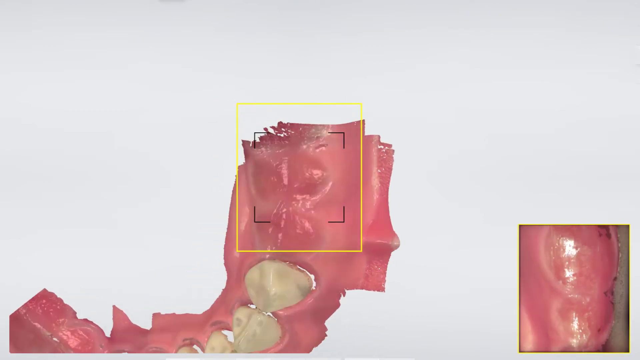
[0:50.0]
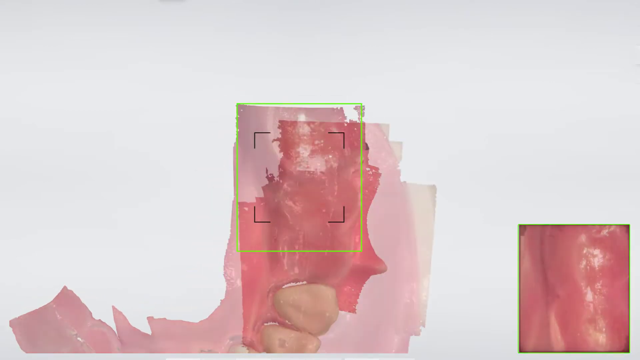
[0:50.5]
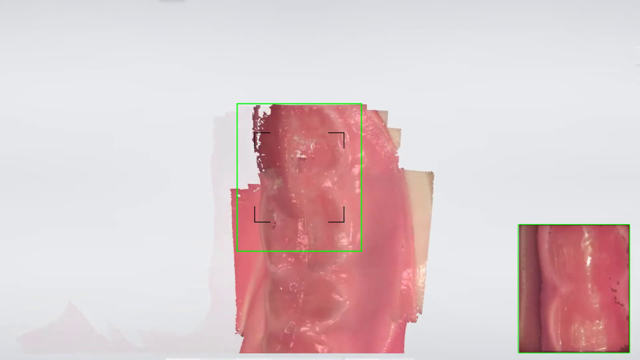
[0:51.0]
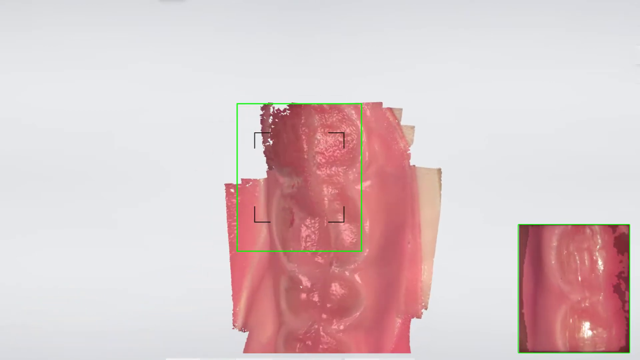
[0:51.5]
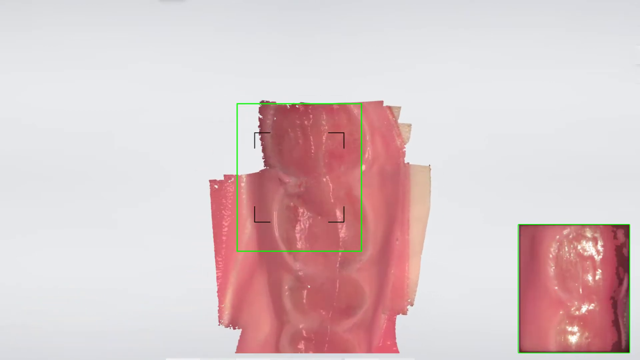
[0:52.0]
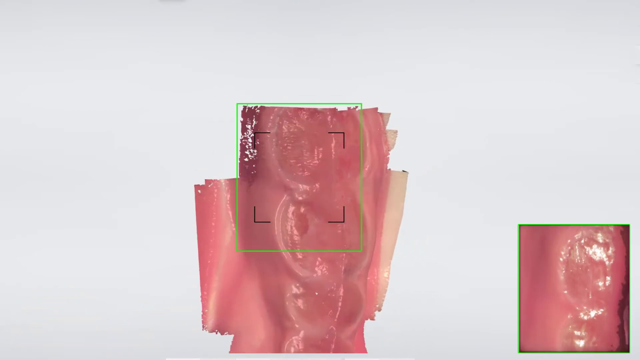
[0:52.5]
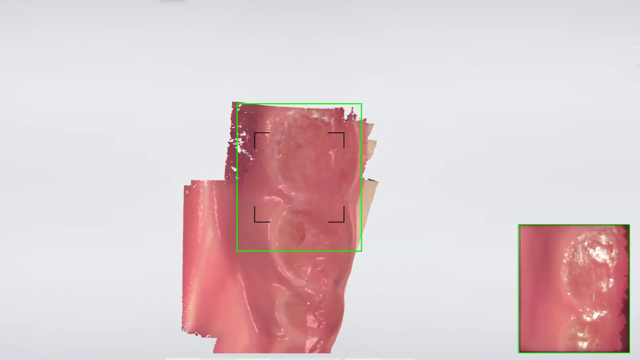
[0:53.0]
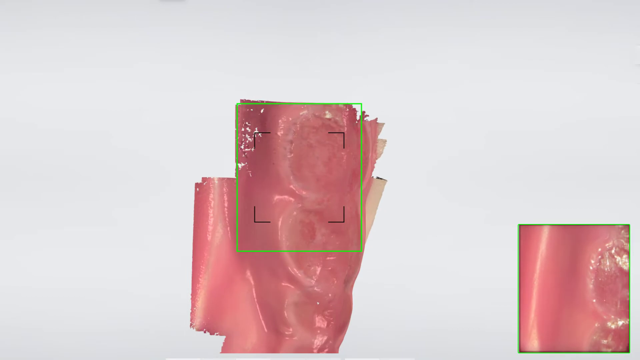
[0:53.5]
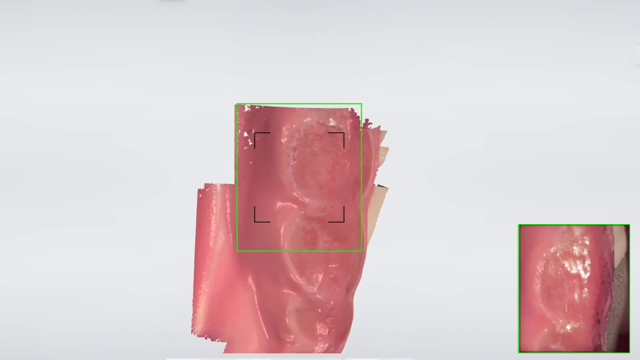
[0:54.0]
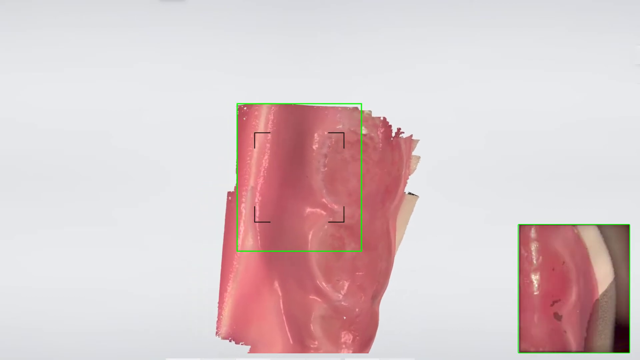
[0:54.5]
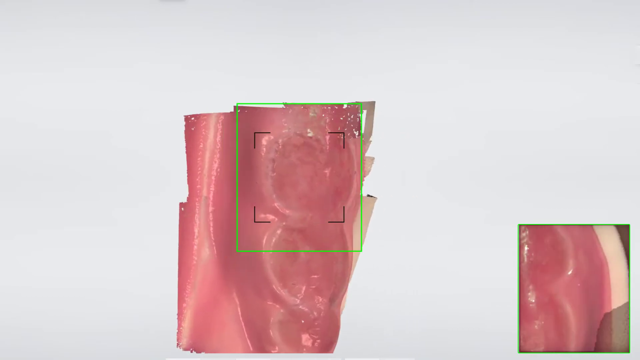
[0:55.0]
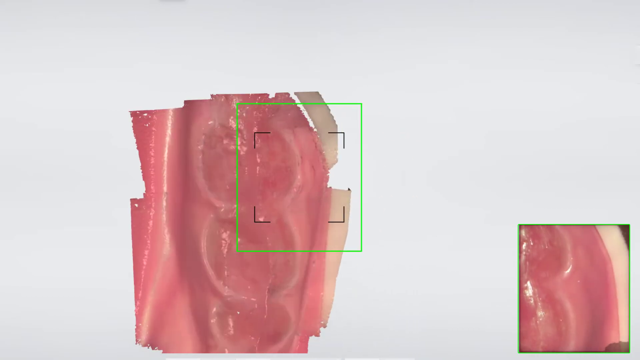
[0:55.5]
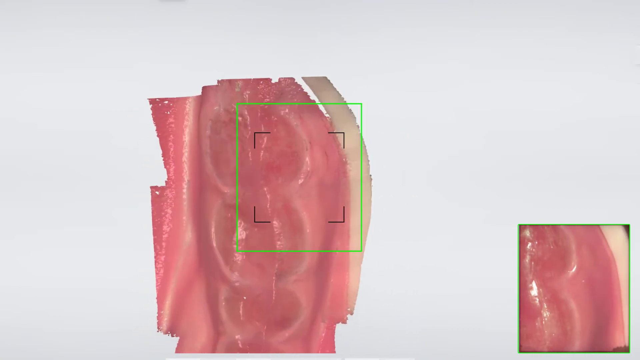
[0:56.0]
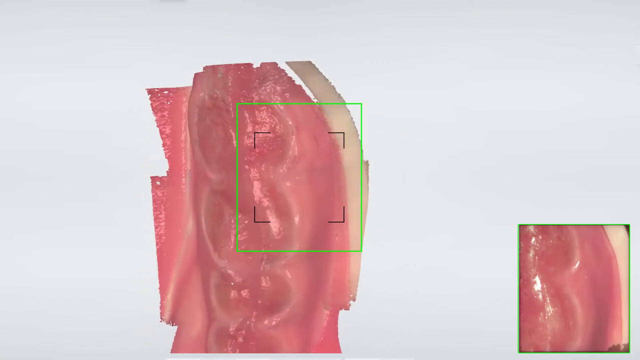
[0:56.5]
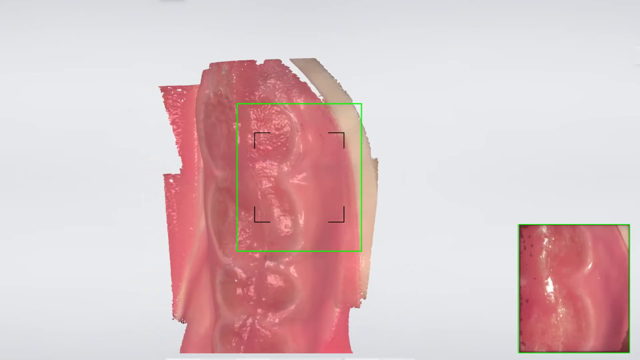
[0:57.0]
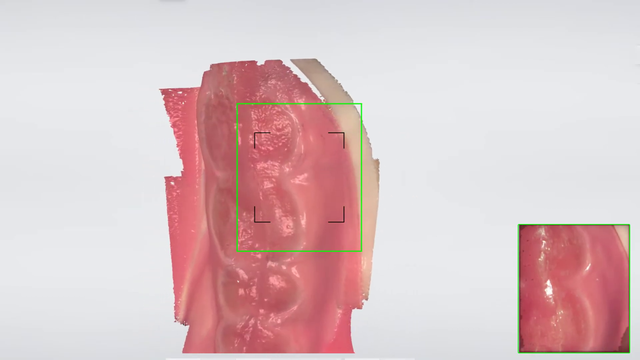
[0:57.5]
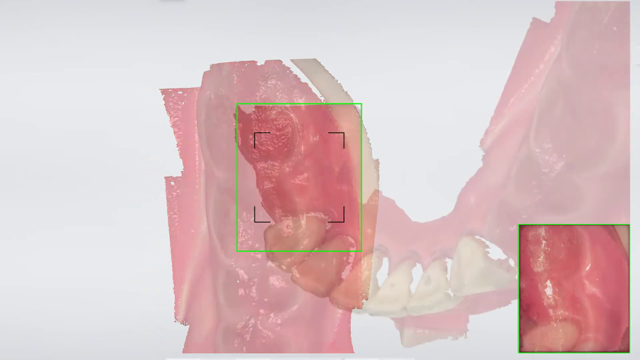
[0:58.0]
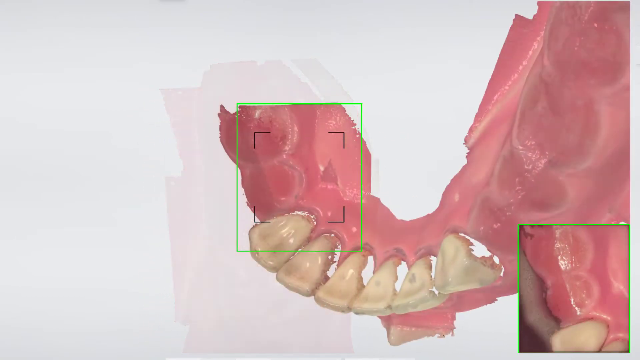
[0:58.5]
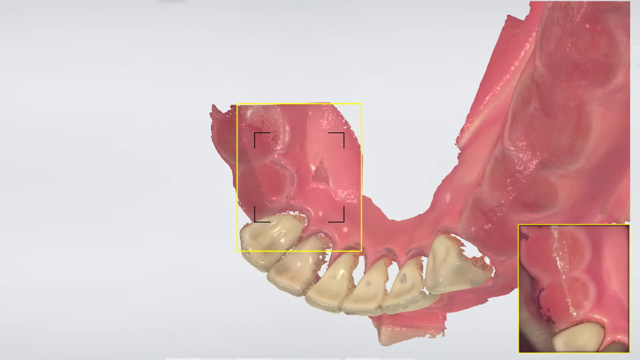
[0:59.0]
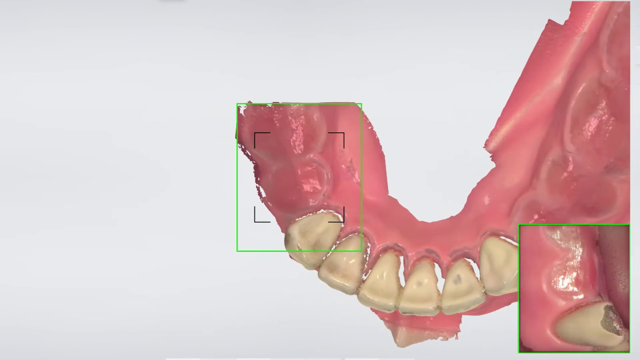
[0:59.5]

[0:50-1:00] The view is at the back of the right side of the teeth. The image goes further up into the jaw, showing the gaps where teeth were previously. It then changes to show the left side of the gum, focusing over the holes and collecting more details. Some gaps behind the teeth remain where the image has not been completed. The camera image is still on the right, and the centre shows the model of the teeth being built up. The gums and teeth all look quite healthy.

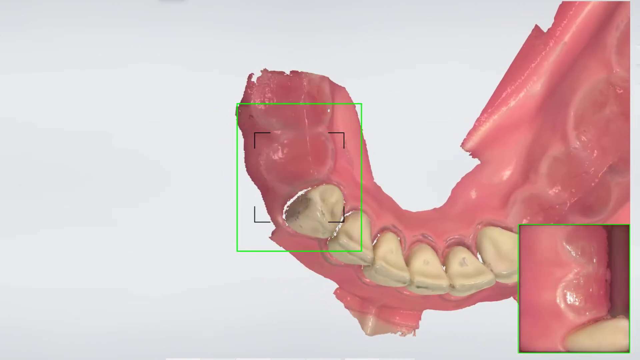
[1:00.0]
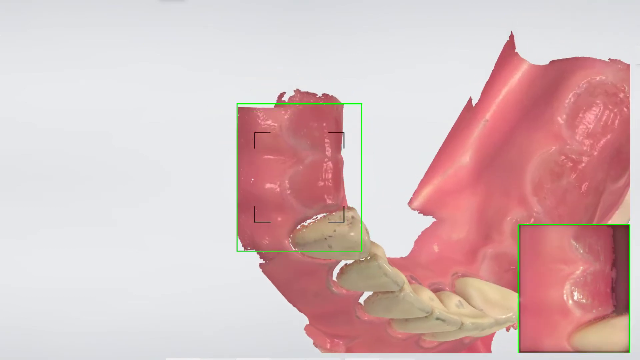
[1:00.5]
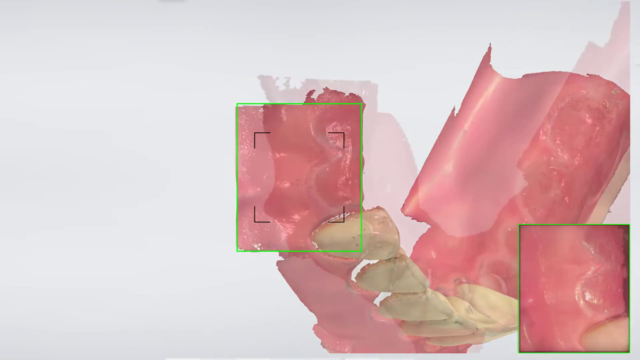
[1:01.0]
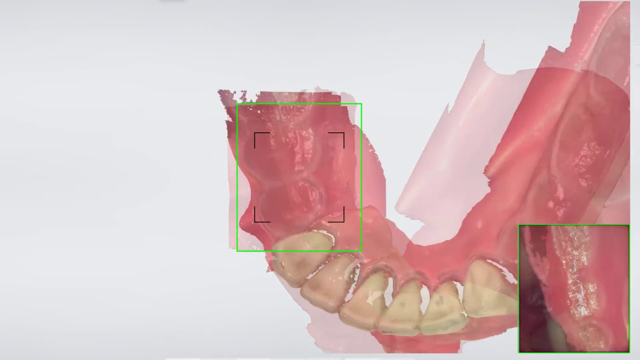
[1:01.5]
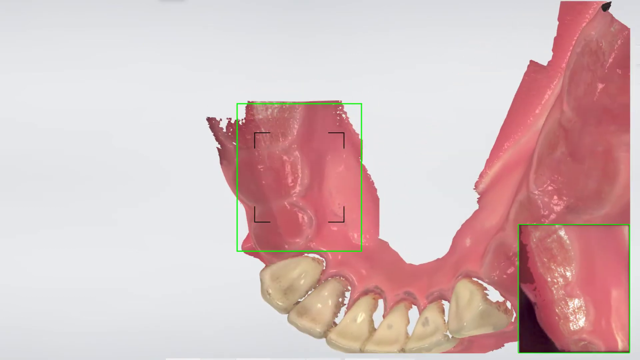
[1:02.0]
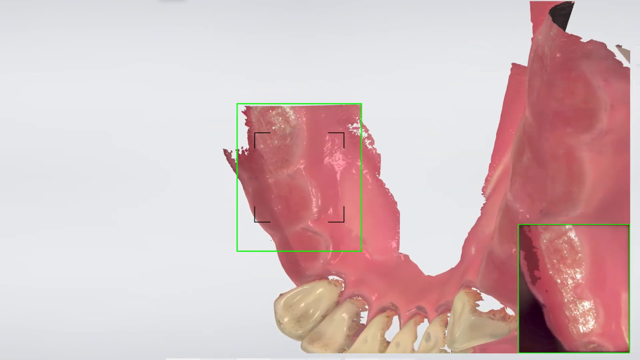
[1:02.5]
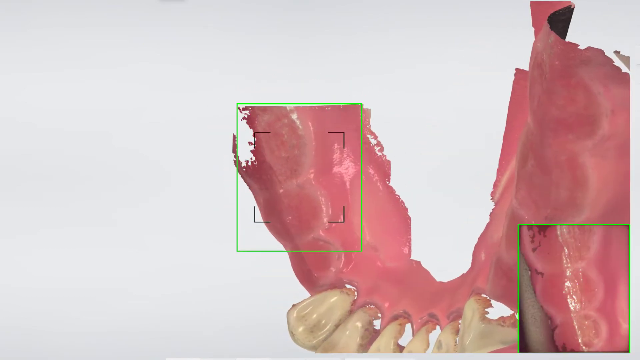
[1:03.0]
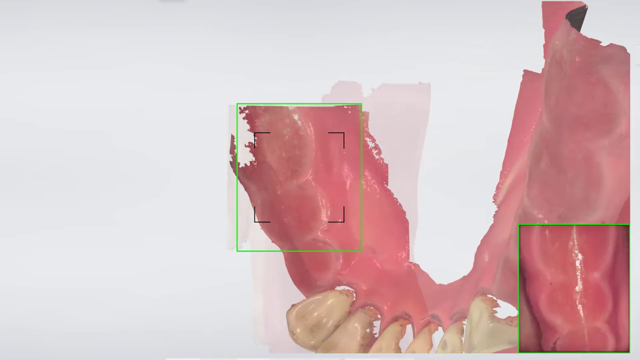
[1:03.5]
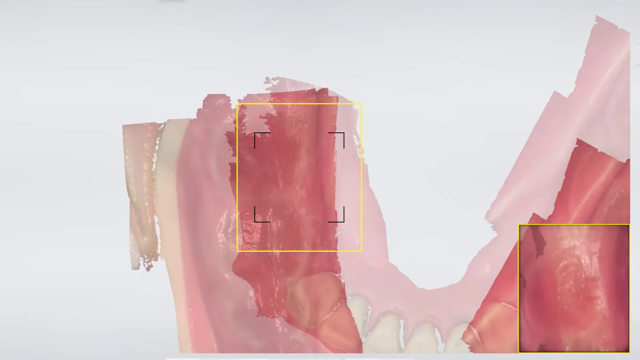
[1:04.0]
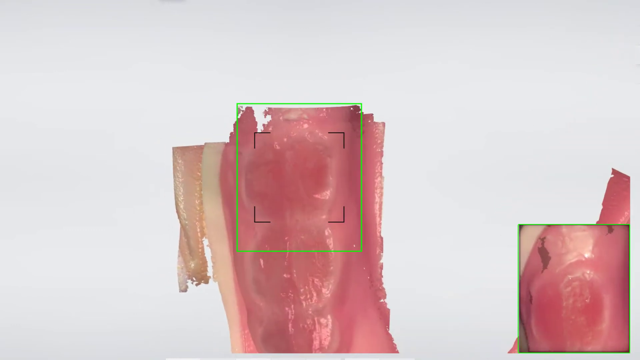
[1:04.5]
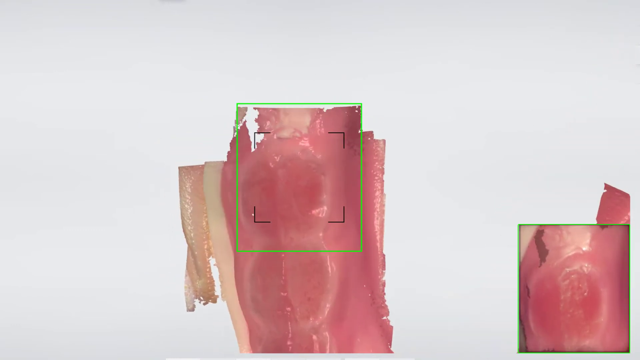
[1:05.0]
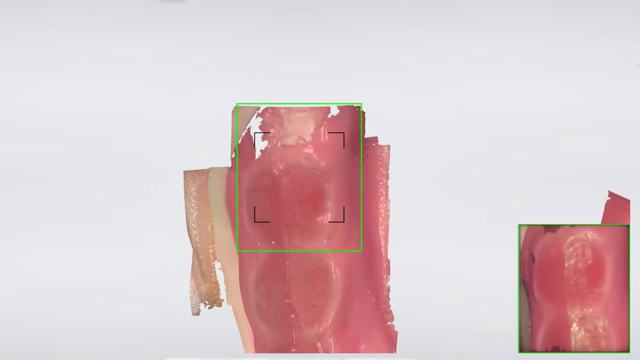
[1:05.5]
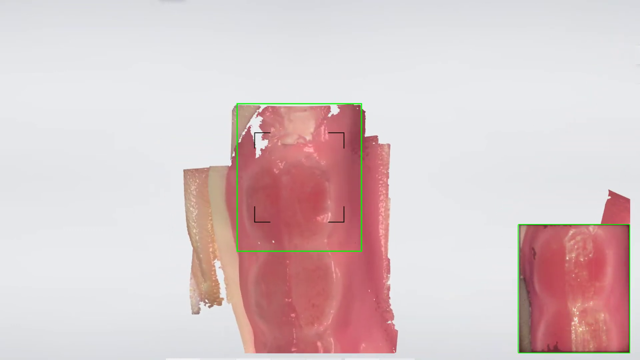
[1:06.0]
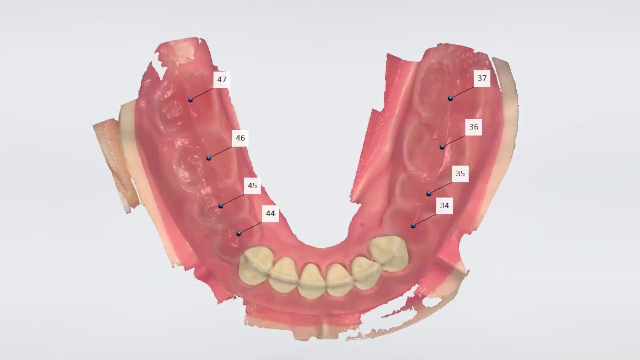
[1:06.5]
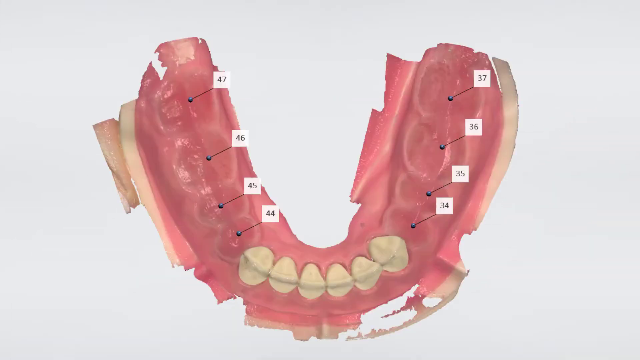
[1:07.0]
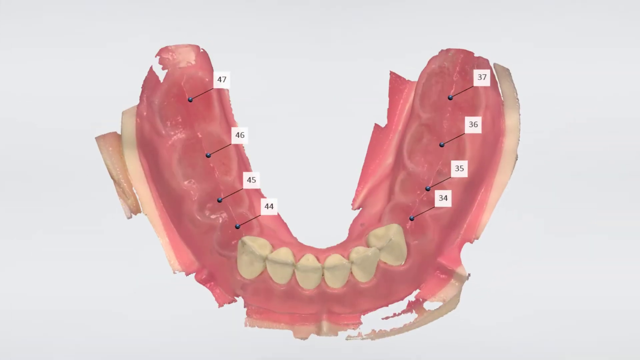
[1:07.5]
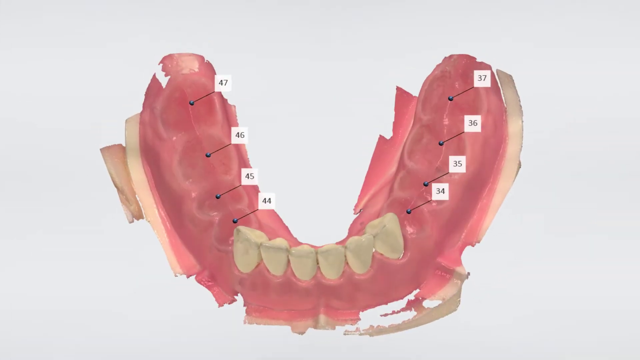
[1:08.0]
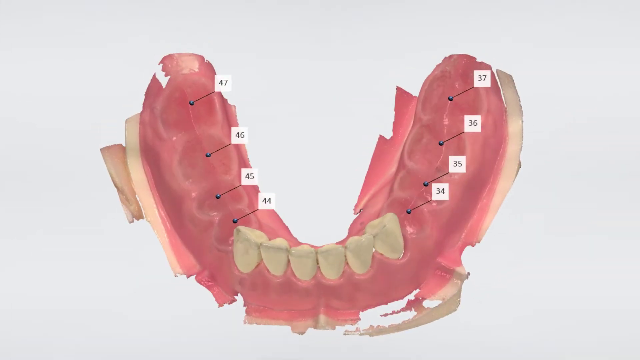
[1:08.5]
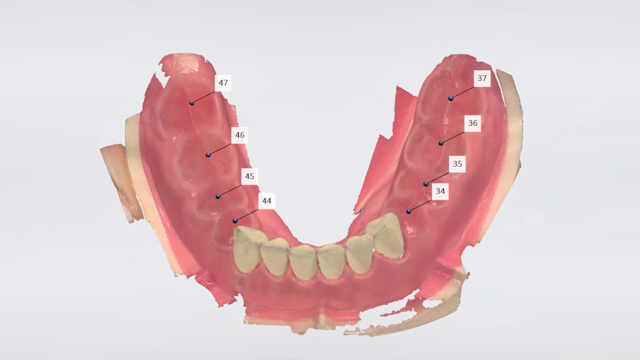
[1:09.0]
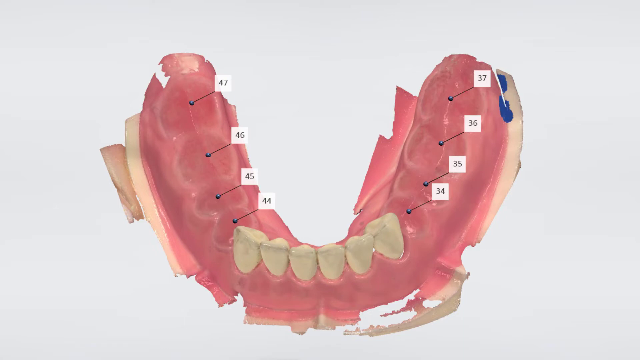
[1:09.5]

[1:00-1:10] The image moves around on the left side. As the green box hovers over part of the gum, the image of it is built up by adding layers going from the centre to the top. The image then changes to a completed rendering of the teeth. A blue line is drawn on the right side of the gums, below the bottom of the gum, so the whole gum is still visible with additional details at the bottom. The blue line appears to start at the top of the semicircle of the jaw and move downwards.